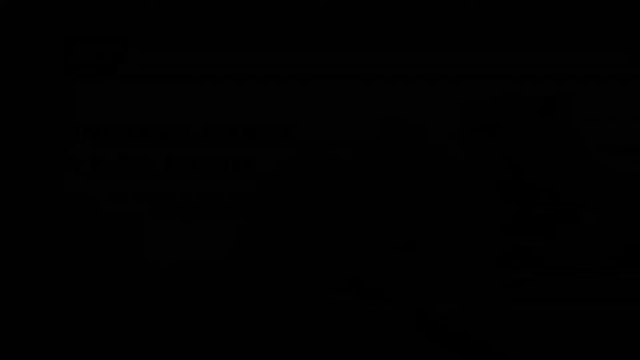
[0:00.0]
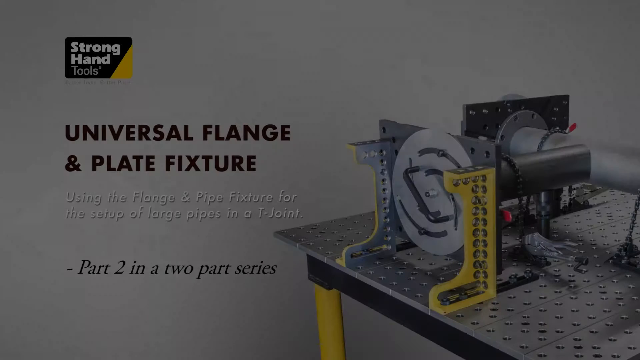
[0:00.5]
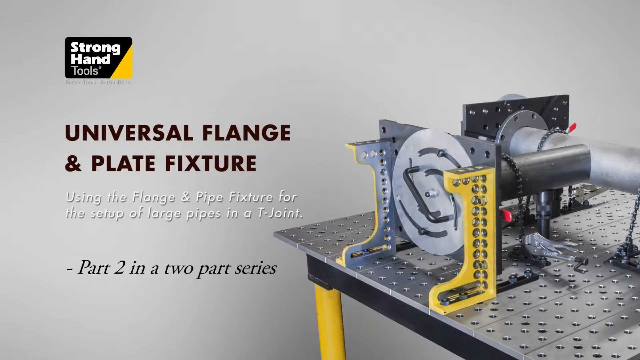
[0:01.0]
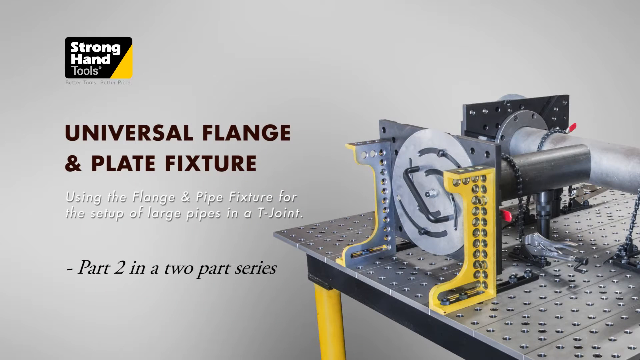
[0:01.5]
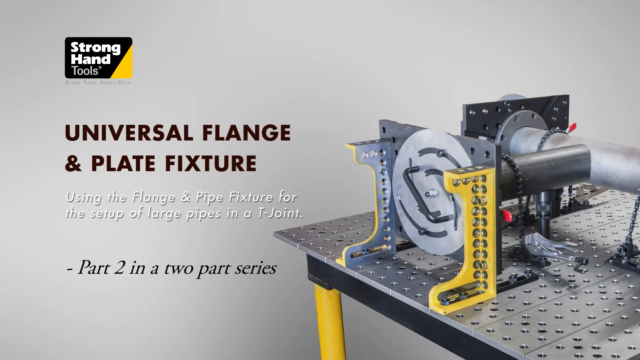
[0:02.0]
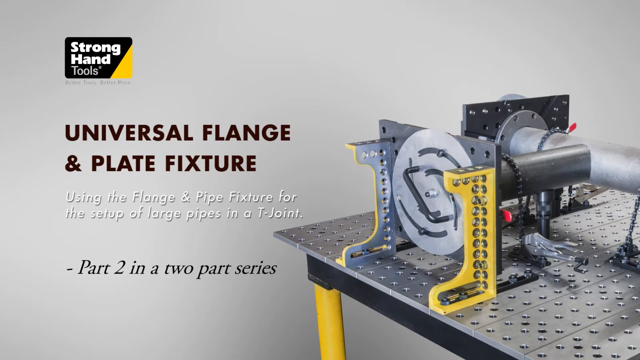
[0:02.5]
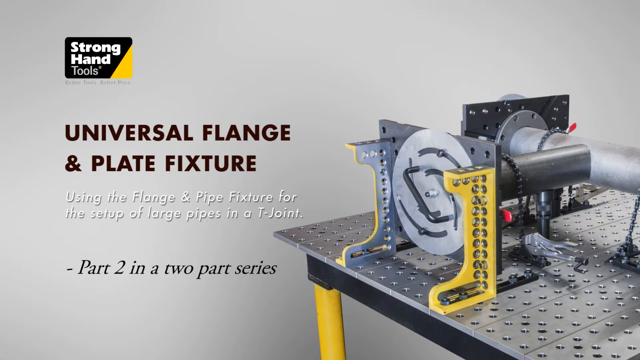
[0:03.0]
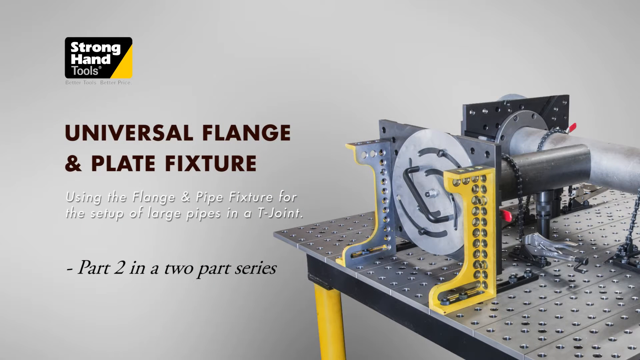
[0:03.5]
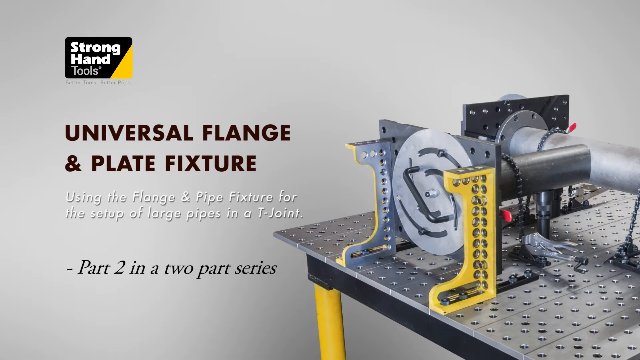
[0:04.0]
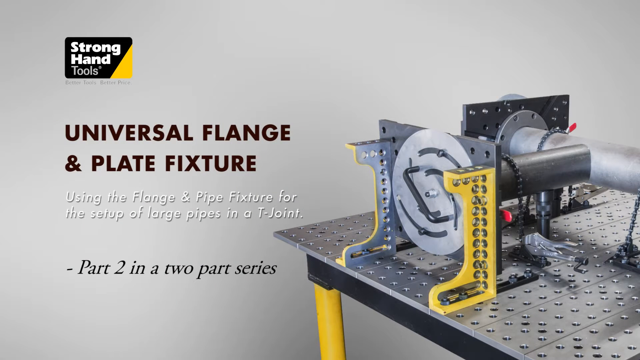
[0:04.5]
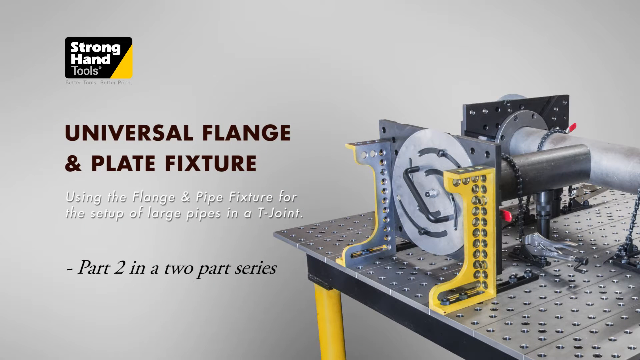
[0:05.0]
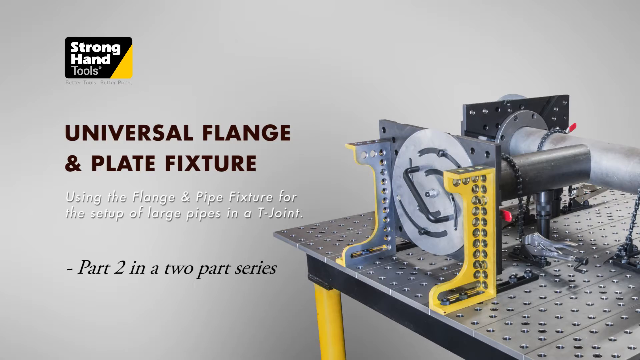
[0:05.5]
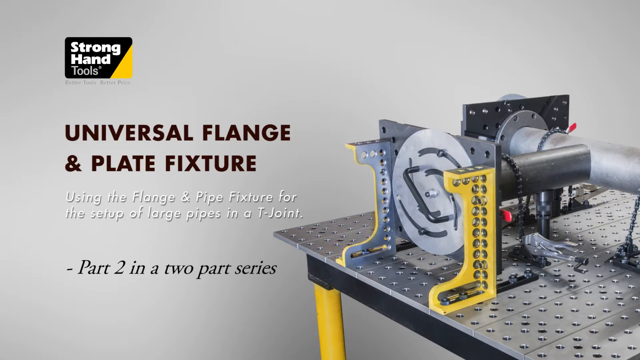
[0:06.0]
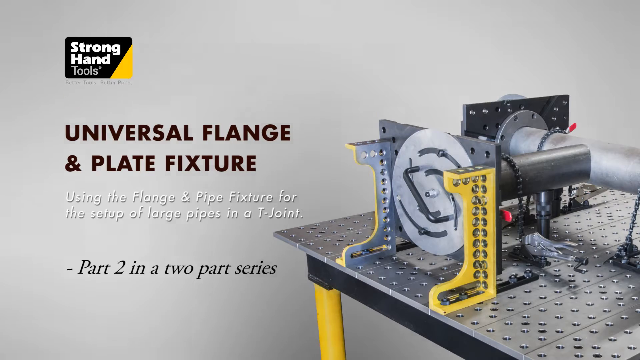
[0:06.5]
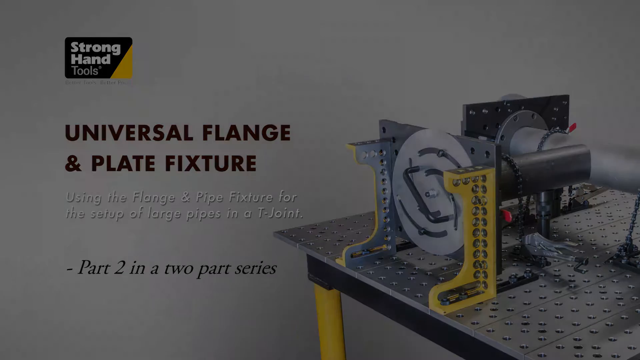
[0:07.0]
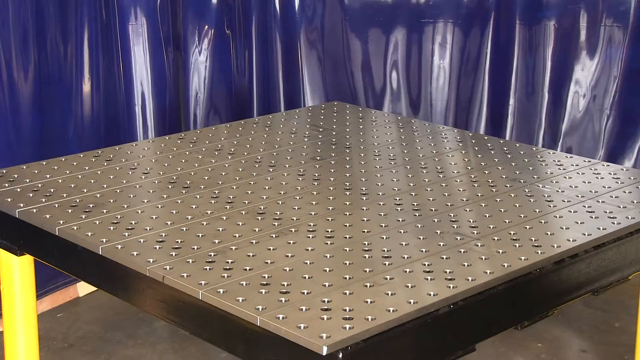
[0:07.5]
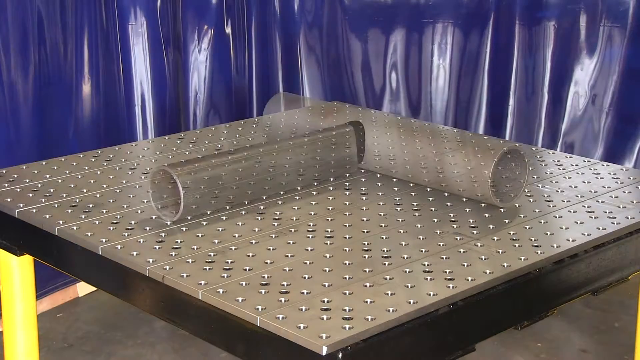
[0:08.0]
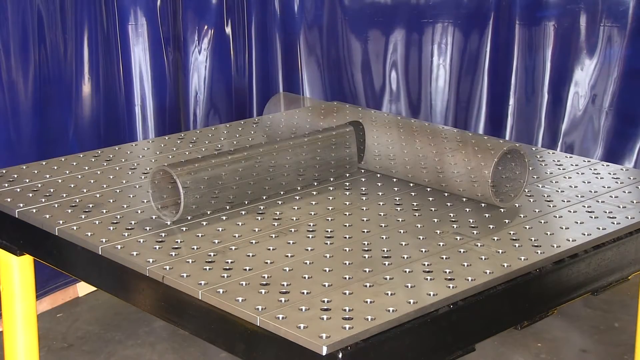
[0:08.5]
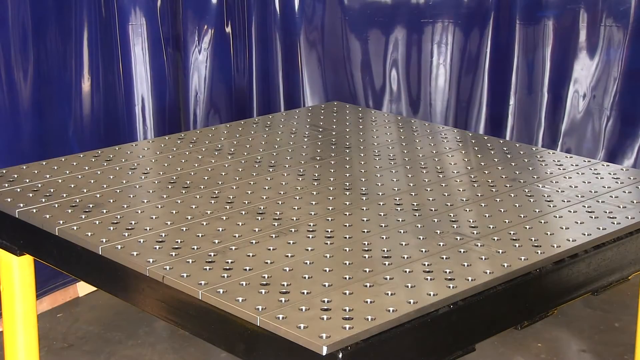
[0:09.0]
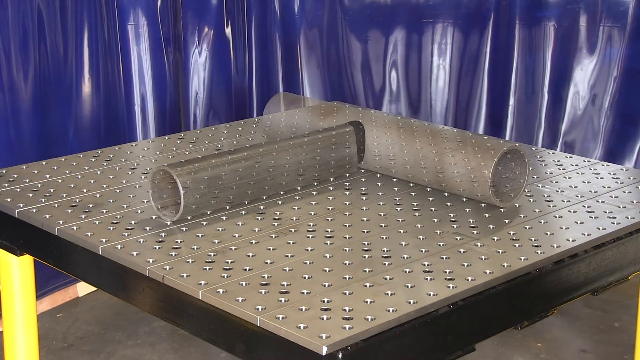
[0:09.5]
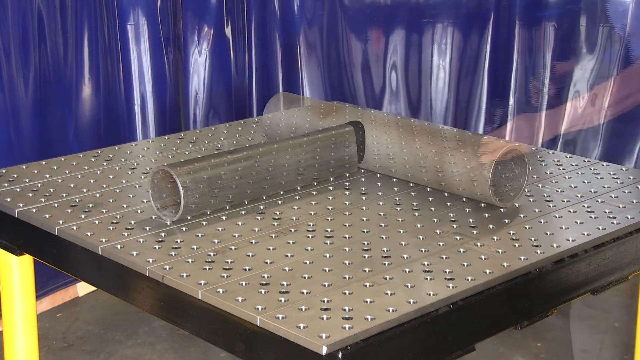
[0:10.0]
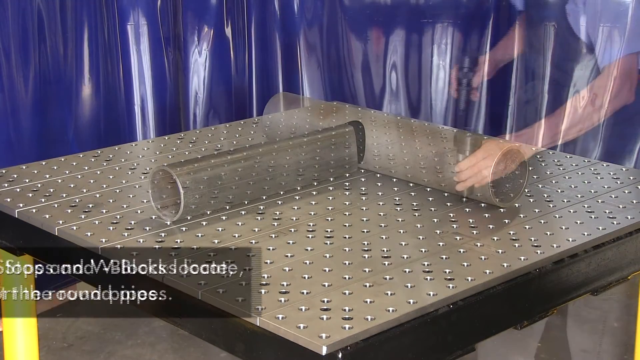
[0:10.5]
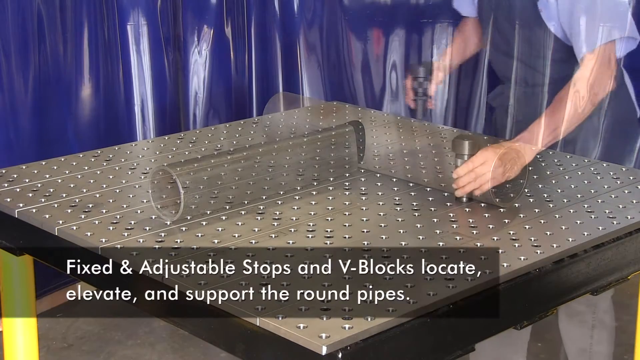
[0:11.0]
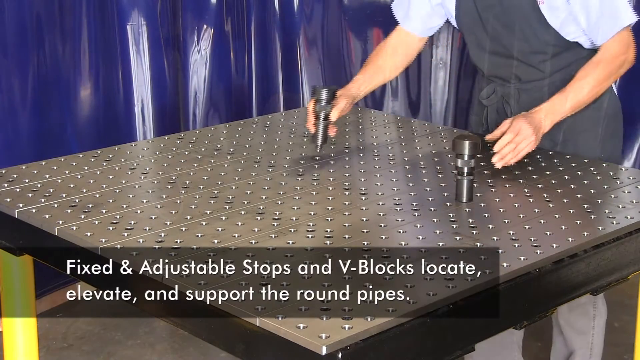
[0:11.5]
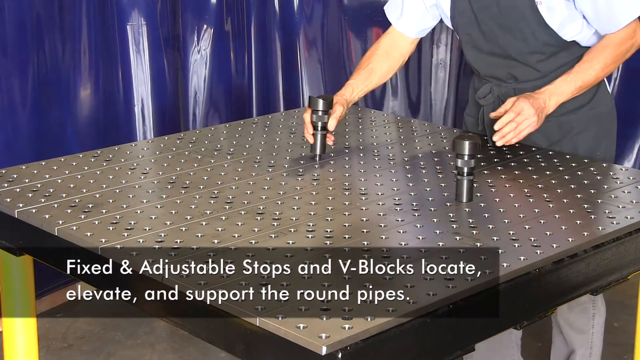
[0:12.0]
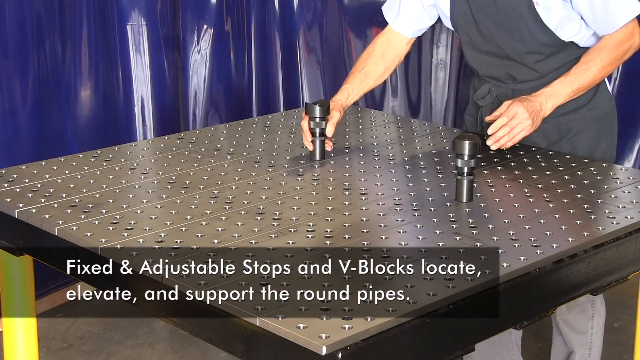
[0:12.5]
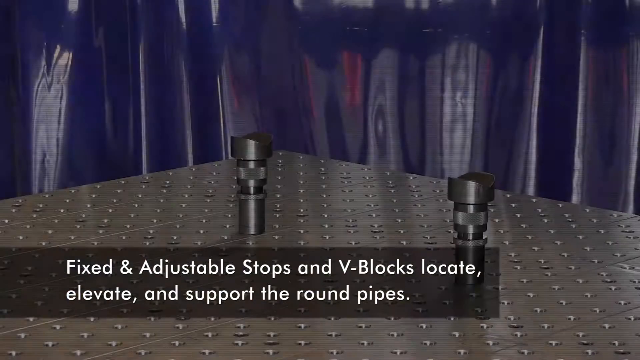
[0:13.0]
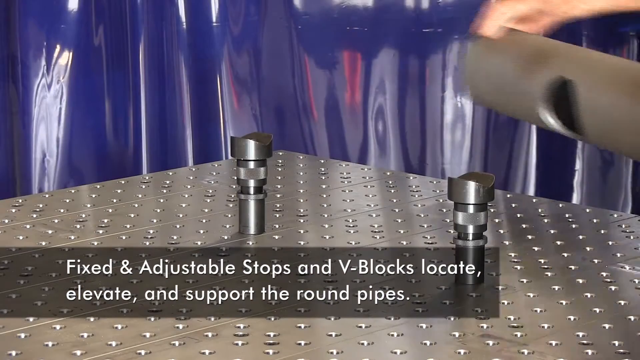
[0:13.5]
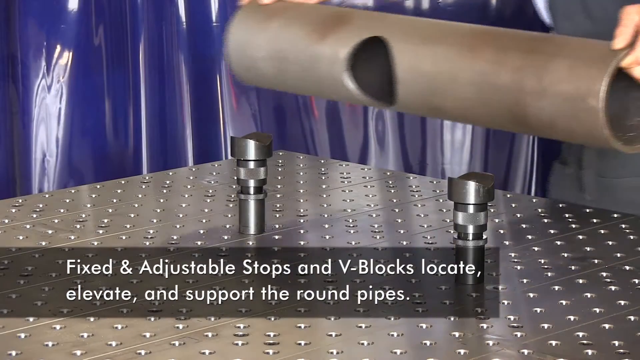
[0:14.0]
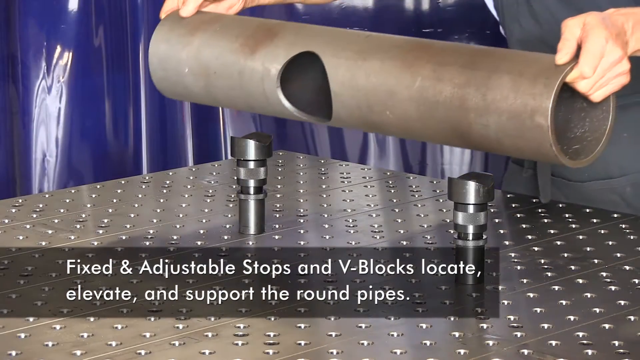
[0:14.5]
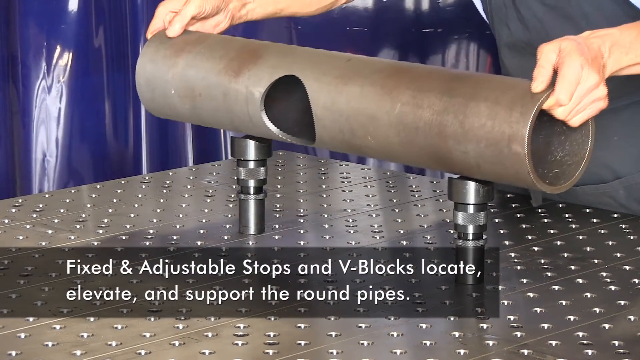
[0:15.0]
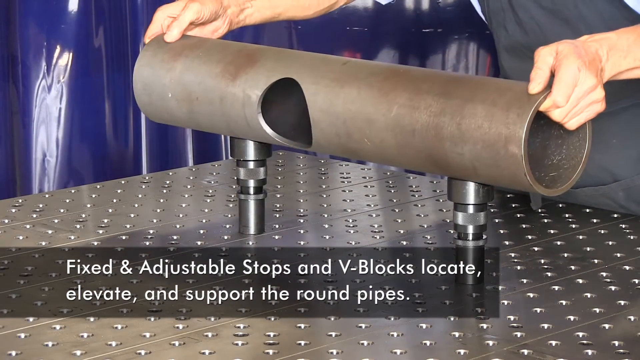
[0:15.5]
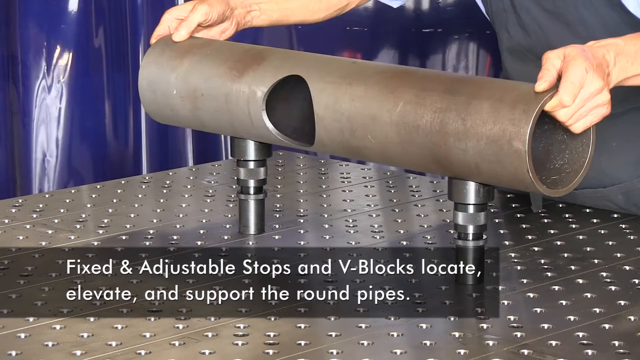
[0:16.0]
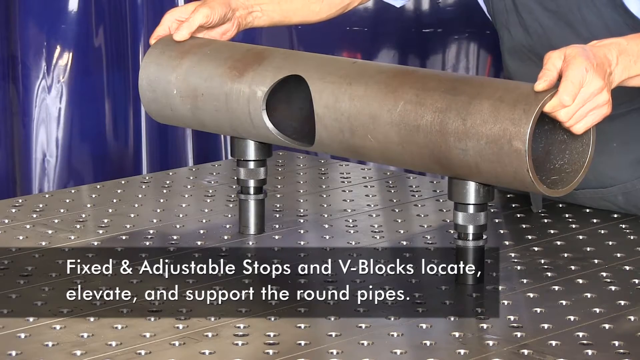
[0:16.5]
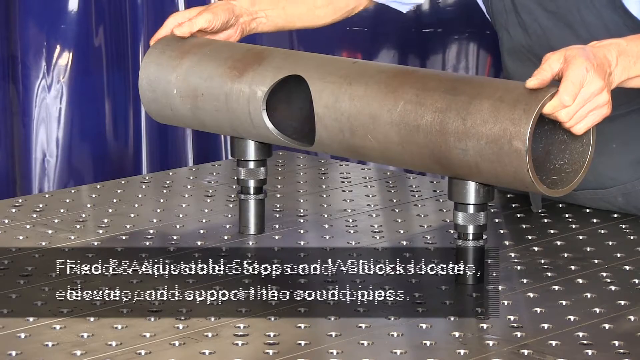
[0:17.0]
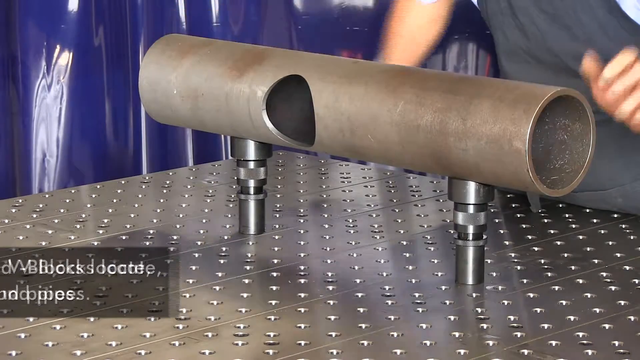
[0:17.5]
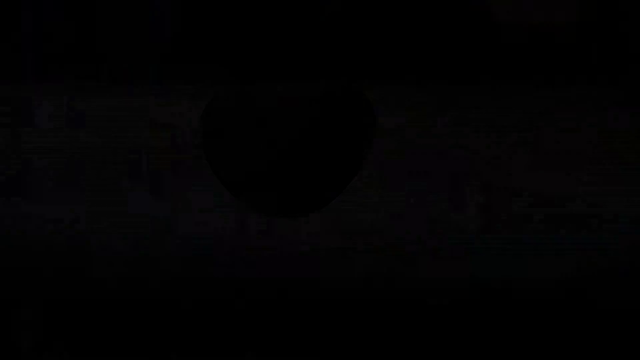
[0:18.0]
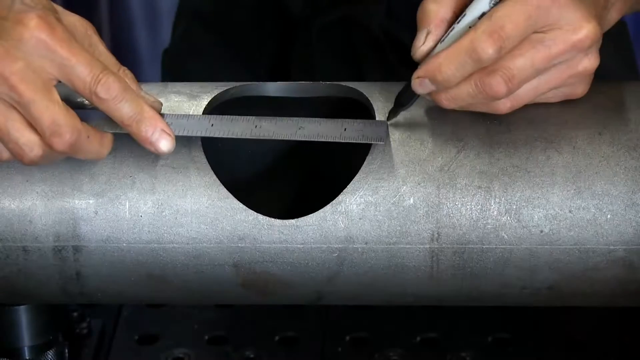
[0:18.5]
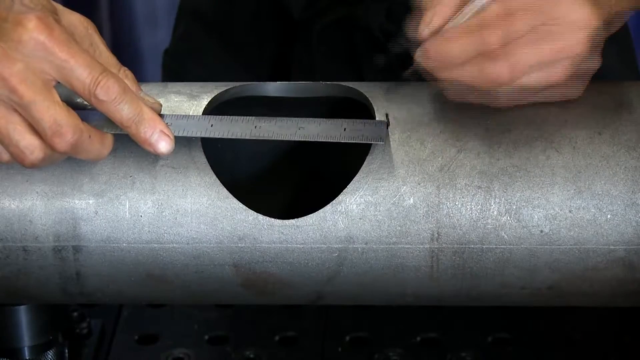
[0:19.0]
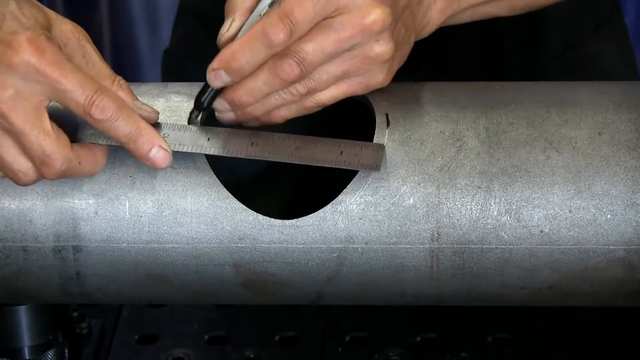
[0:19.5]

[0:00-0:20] Part of a machine is supported on a table. On-screen text identifies it as the "universal flange and plate fixture," "part two in a two-part series," made by Stronghand Tools. The table has little bumps on it. Text reads "Fixed and adjustable straps and V-blocks locate, elevate, and support the round pipes." A person puts a large pipe with holes in it on a support on the table. Everything is metal: the table, the pipe, and the two supports placed on the table, which are set equidistant. The person appears to possibly be a woman, but this cannot be determined; they wear an apron and have very thin hands. Only their hands and apron are shown.